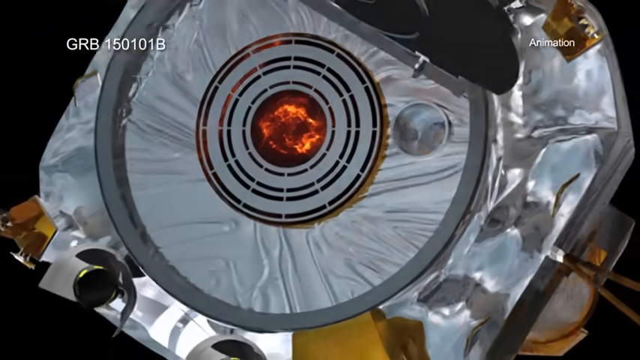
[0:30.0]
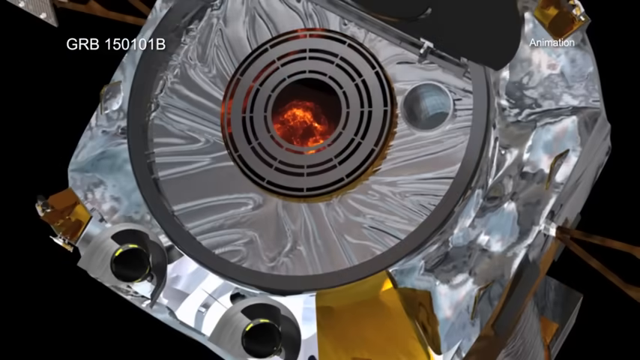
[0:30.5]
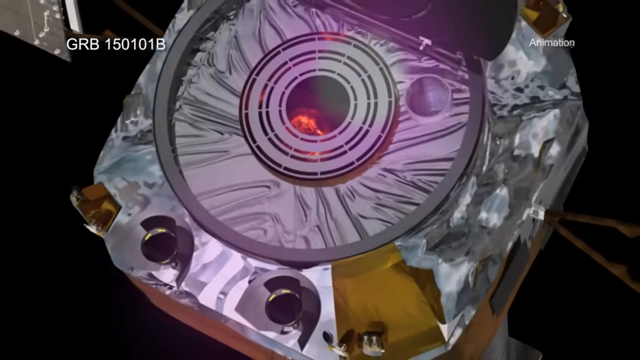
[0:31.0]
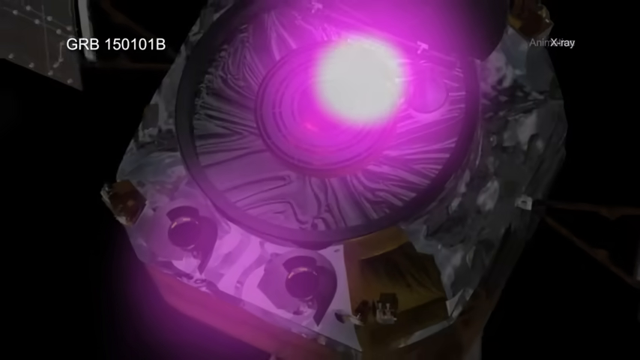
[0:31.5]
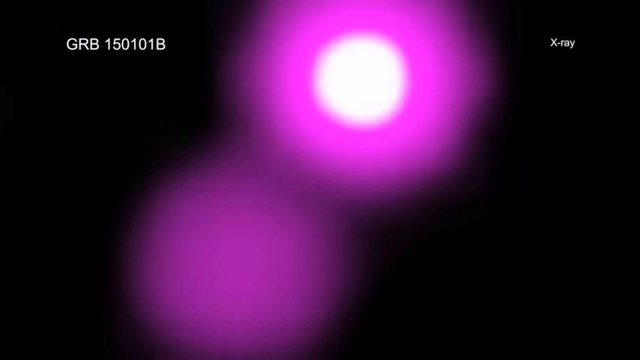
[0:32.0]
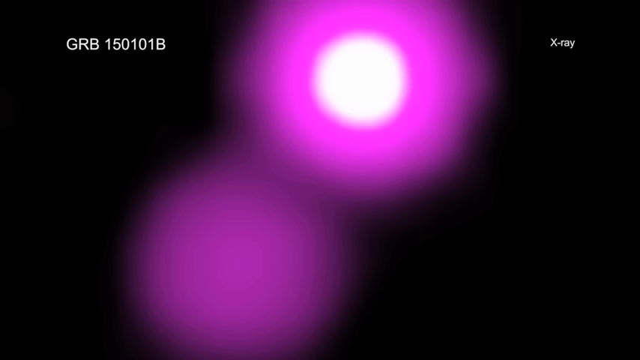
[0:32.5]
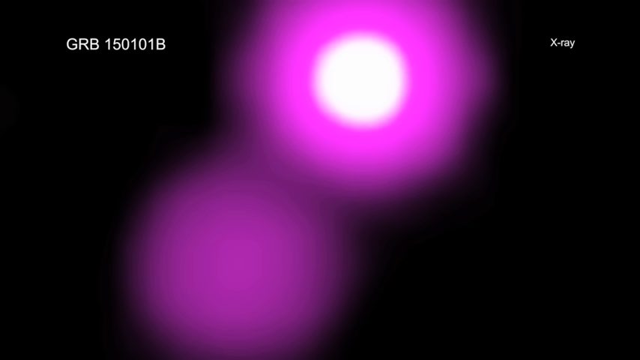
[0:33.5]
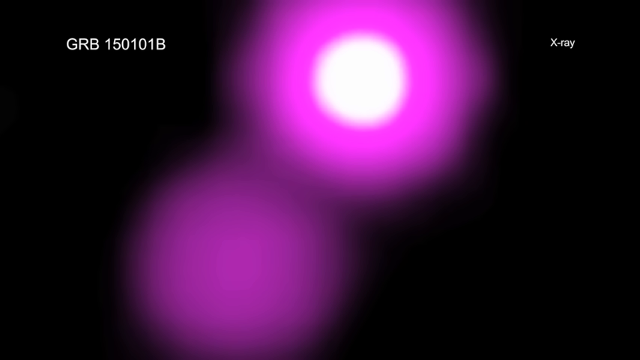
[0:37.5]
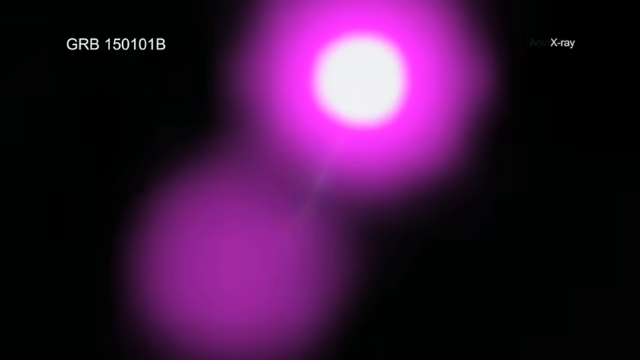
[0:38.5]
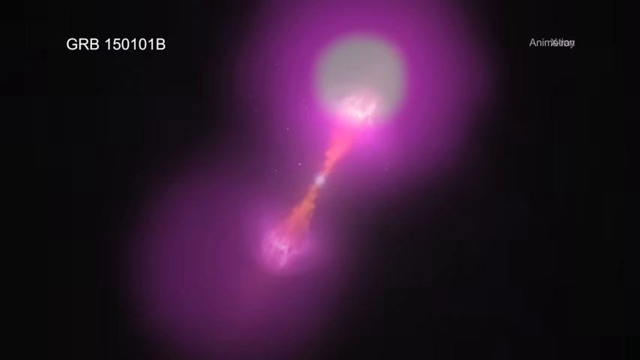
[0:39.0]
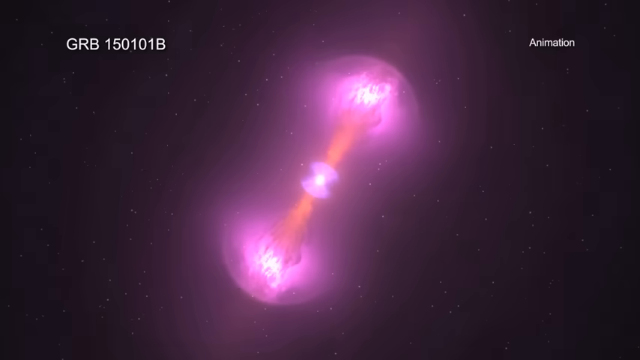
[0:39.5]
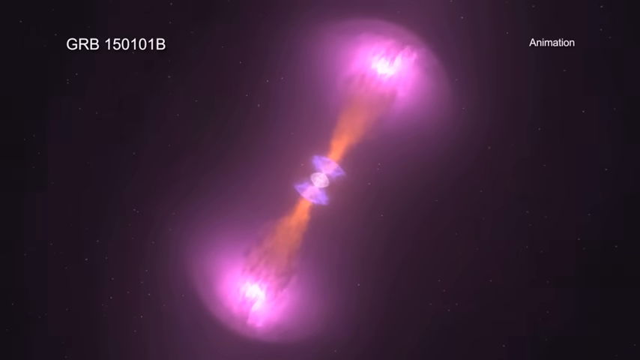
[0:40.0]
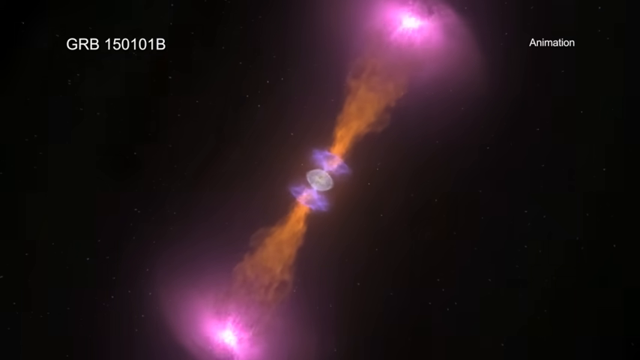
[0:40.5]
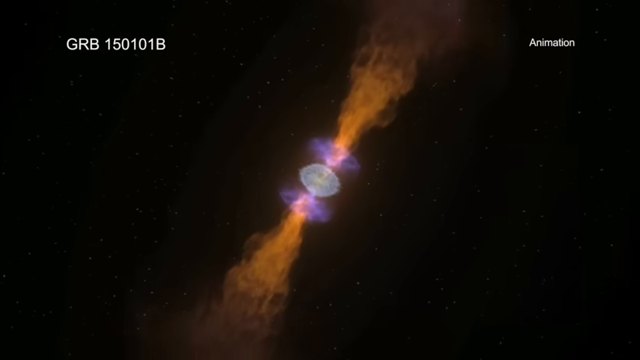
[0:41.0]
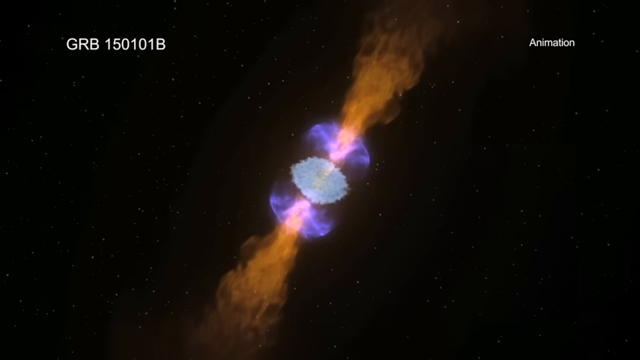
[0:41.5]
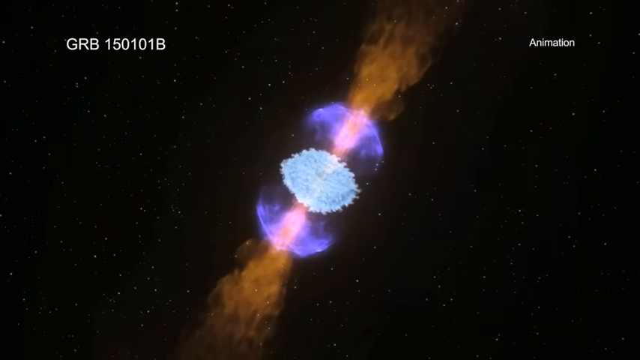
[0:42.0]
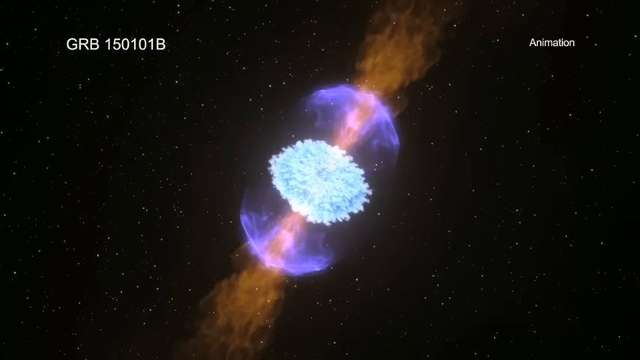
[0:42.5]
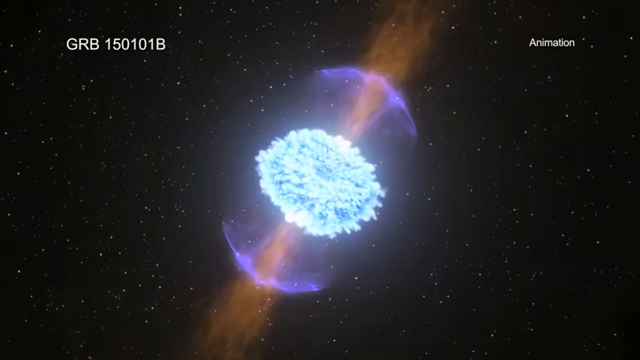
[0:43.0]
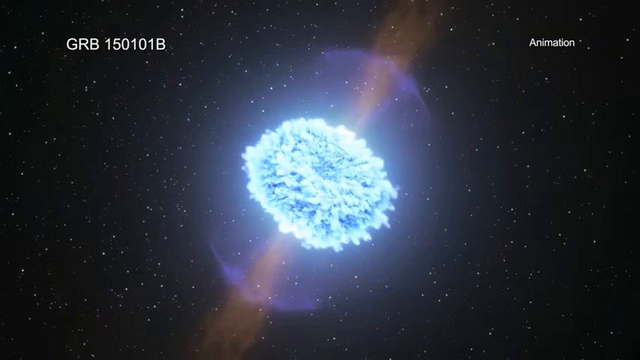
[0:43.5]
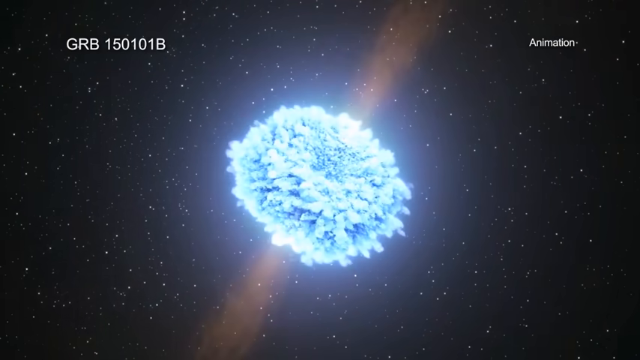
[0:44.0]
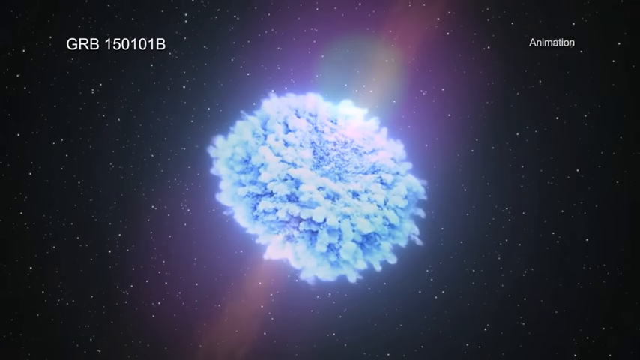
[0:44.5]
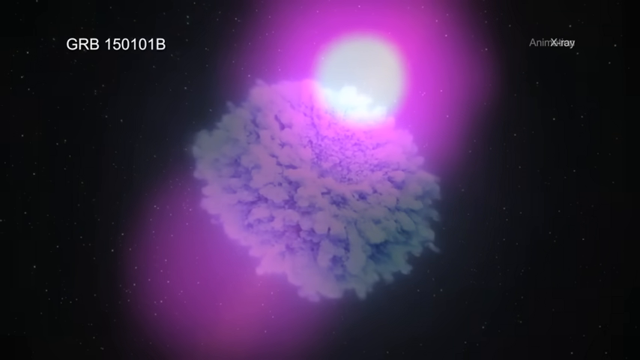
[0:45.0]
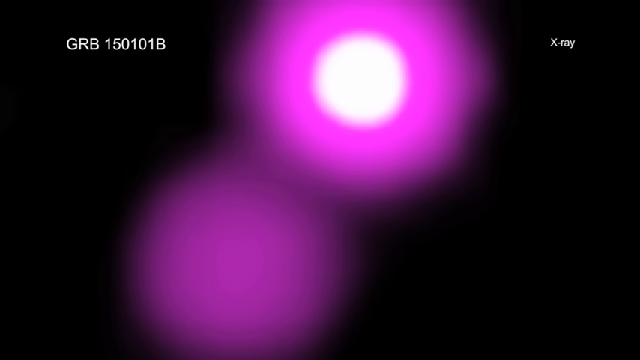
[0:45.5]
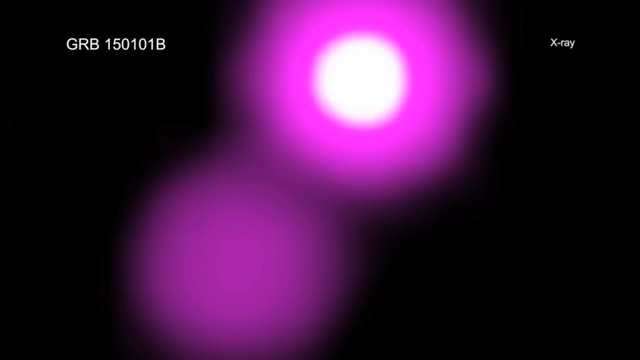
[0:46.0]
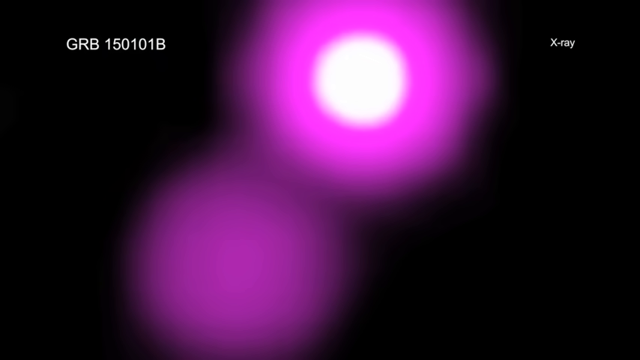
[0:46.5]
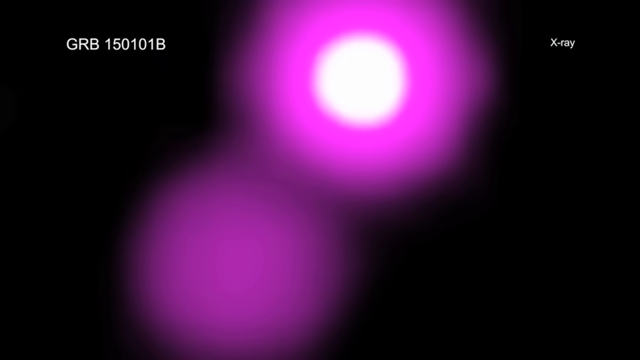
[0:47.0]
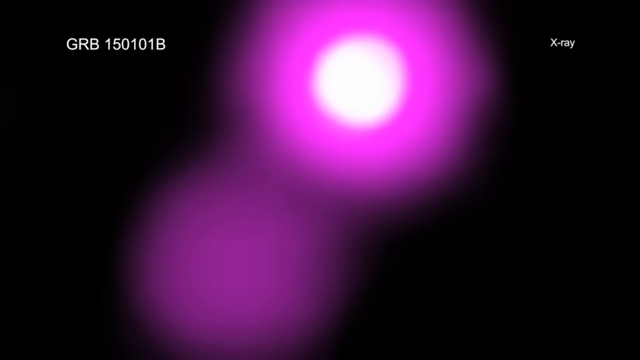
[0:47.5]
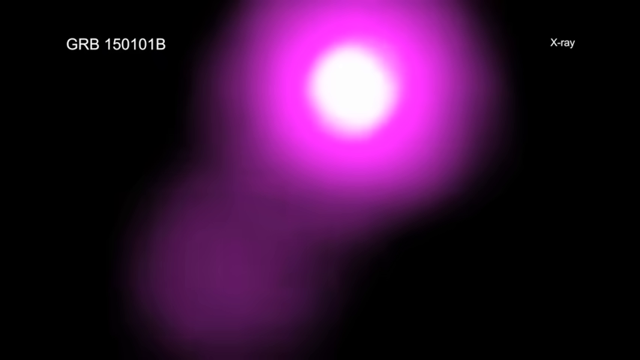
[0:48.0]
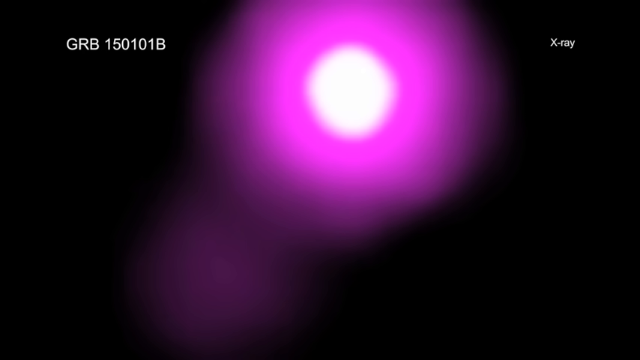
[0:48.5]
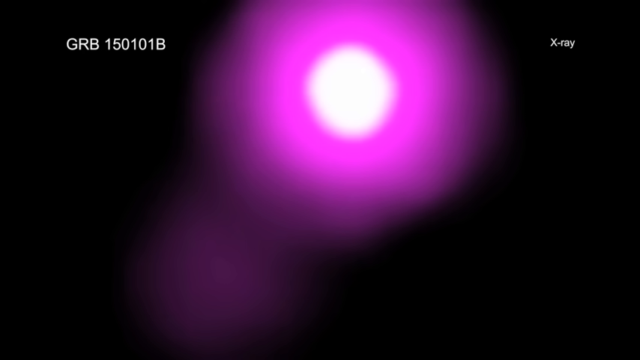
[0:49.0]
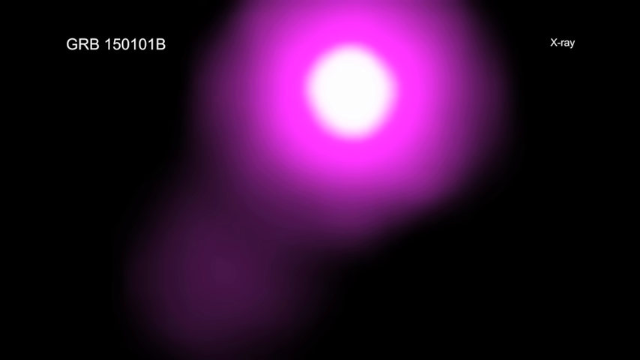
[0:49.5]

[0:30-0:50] A square metallic object is seen from the back, with a circular object in its middle. A growing red light appears in the direct center, possibly some form of energy exhaust. A bright white light shines on the object, and it reflects the light back. The scene transitions to a very bright pink and white circular object floating in front of a black background. It has a very bright white core and a fluorescent pink haze around its border, with a second, less formed shape at the bottom left. A bright flash of energy then emits from the pink structure as it explodes into a completely different object. Energy shoots out of the top and bottom, and the pink turns purple and then bright blue.